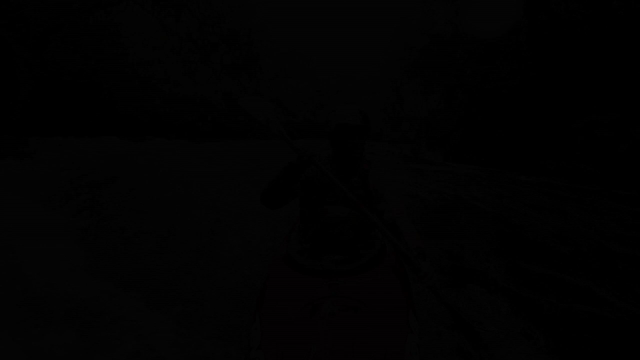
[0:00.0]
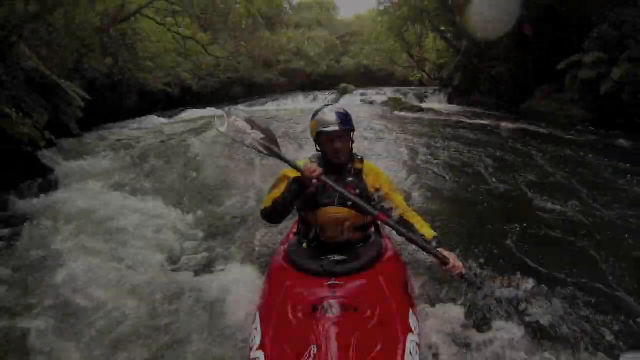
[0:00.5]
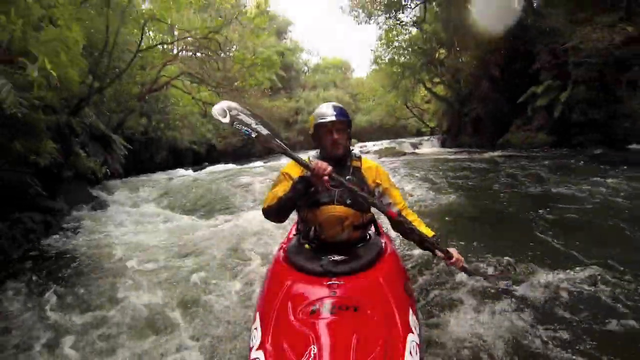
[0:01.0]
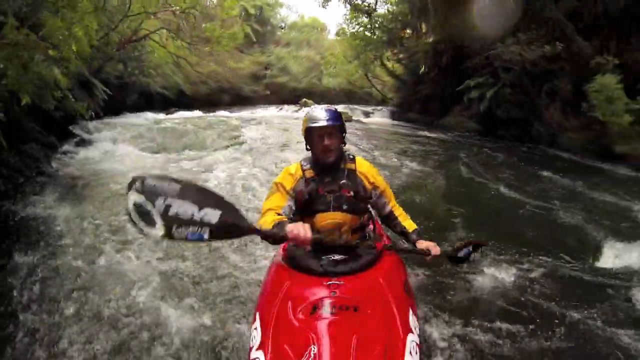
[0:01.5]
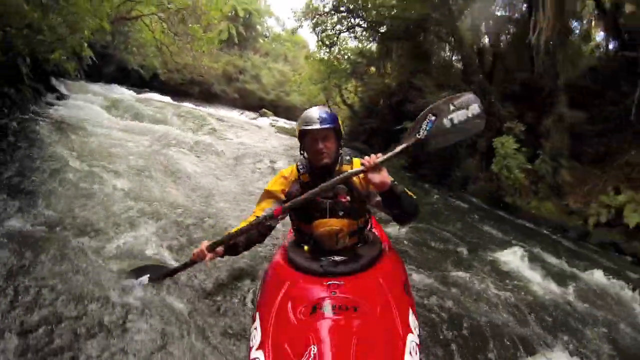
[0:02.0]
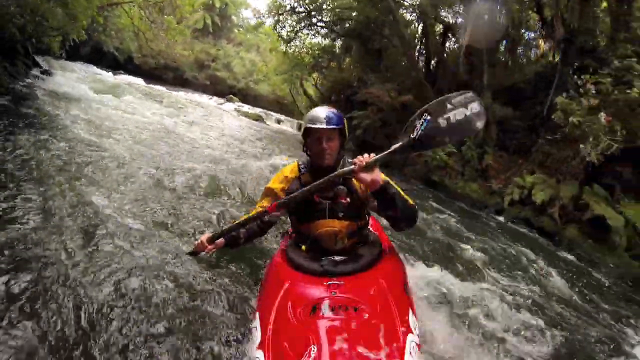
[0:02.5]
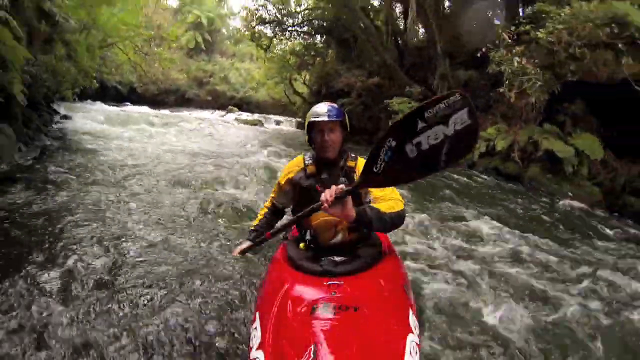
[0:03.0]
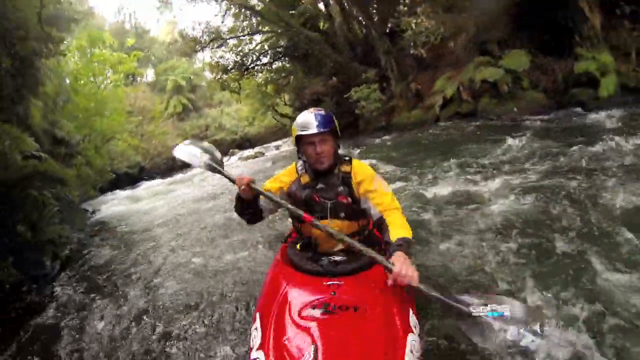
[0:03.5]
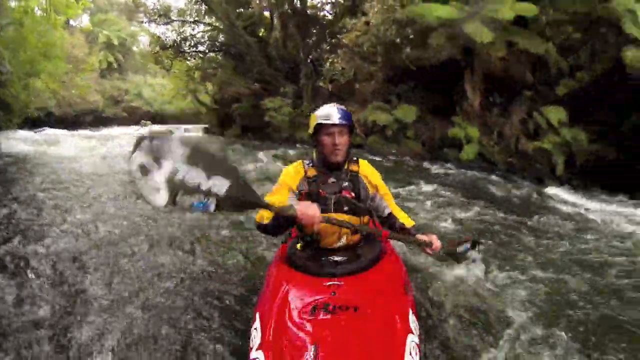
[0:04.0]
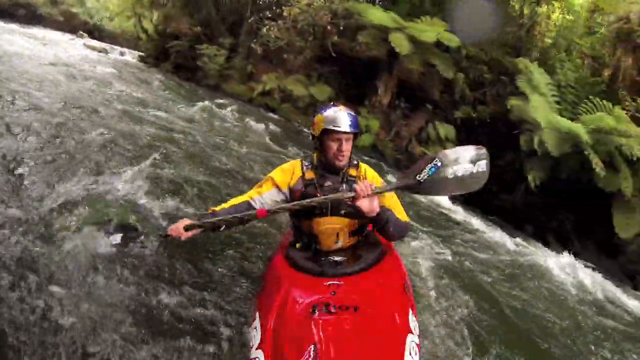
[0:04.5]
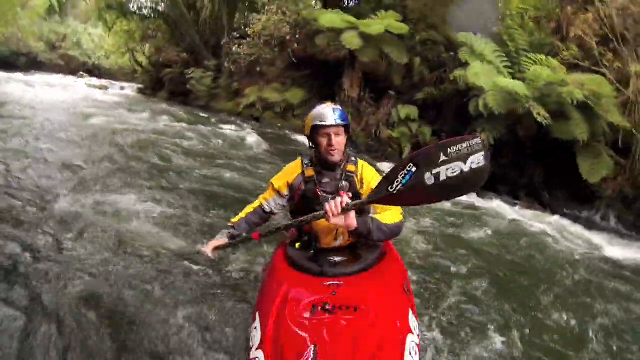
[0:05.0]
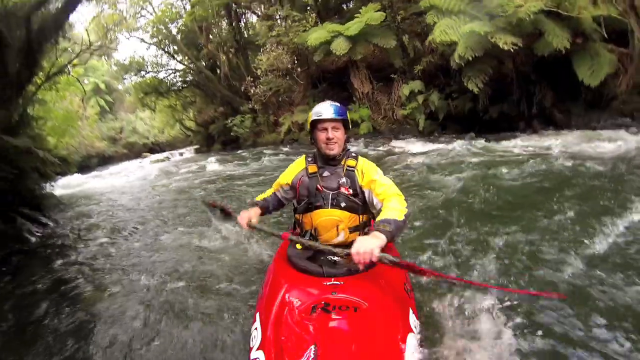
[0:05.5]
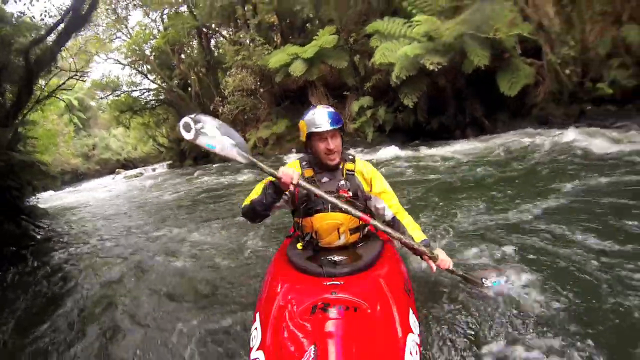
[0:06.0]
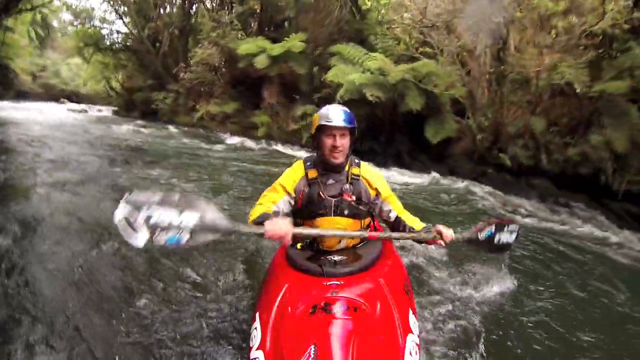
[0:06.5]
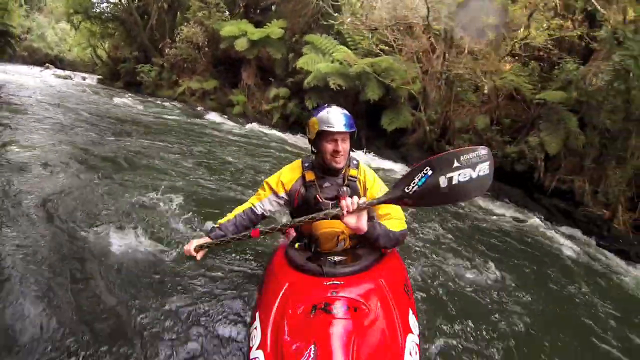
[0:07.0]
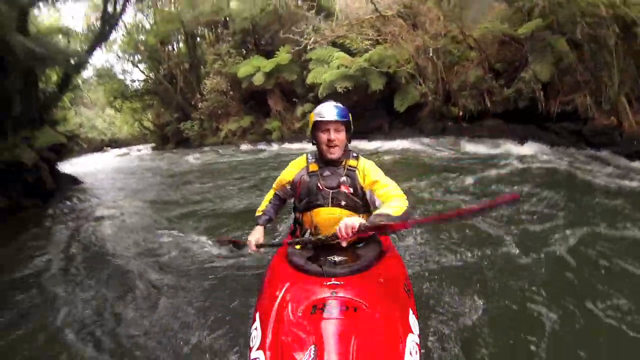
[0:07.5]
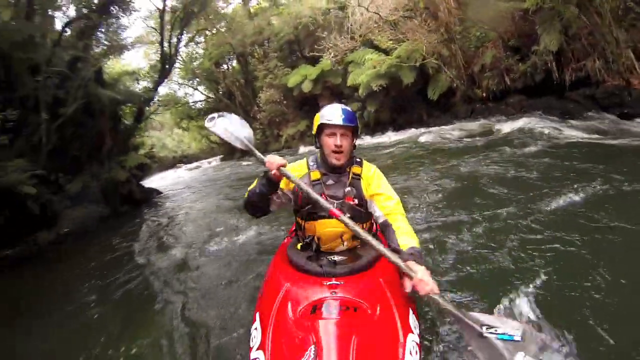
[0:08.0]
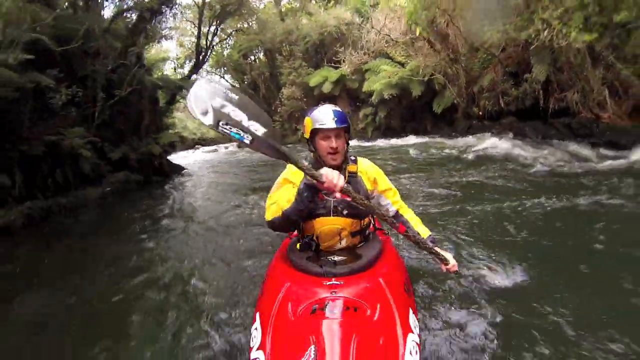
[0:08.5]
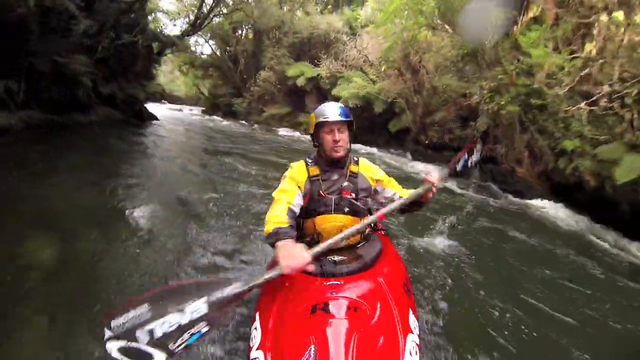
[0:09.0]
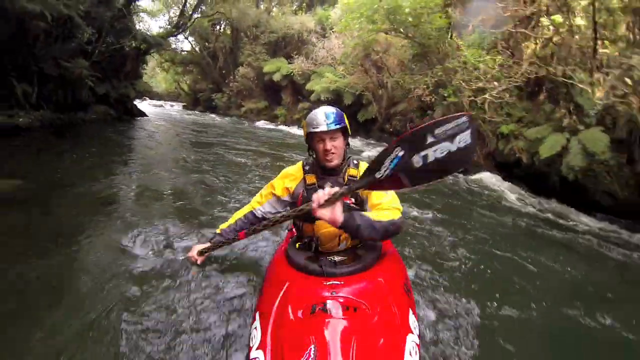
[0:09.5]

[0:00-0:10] A GoPro is attached to the front of a kayak, looking back at a man as he goes down some rapids. Trees line his left and right sides in the background, and the tree line runs back and curves around to the left. He holds a black paddle in his right and left hands and wears a helmet. Some black writing, hard to read, is on the front of the canoe or kayak. He also wears a coat, apparently a yellow jacket. He moves slowly, mostly letting the rapids carry him and using the paddle only to pull himself slightly where he wants to go. He seems to be speaking as he goes and appears very calm. The rapids are not too rough, and a little water splashes up when he puts the paddle in. The river snakes slightly from left to right. Looking closely, he appears to have something attached high on his chest, just above his belly, with two buckles coming up on both sides of his neck and back.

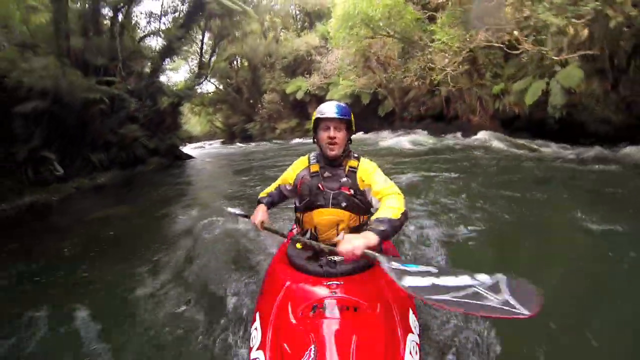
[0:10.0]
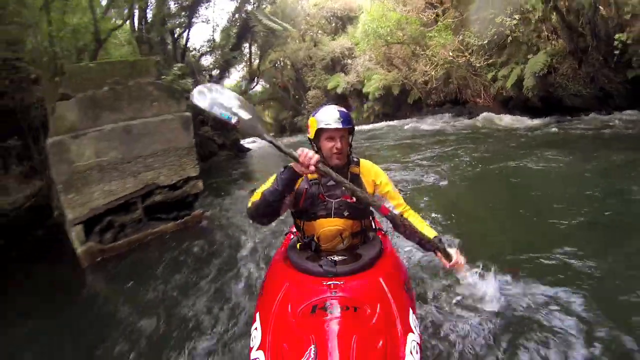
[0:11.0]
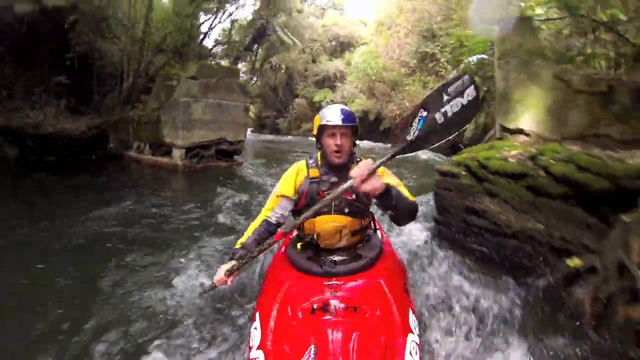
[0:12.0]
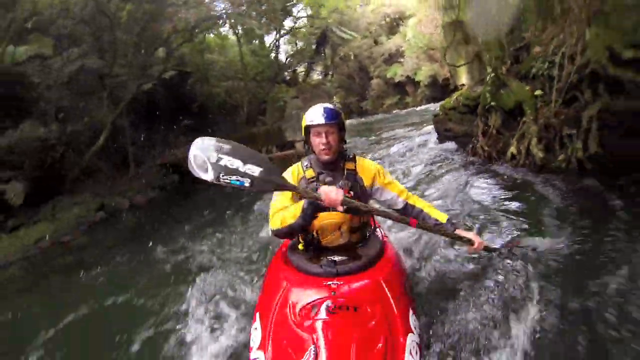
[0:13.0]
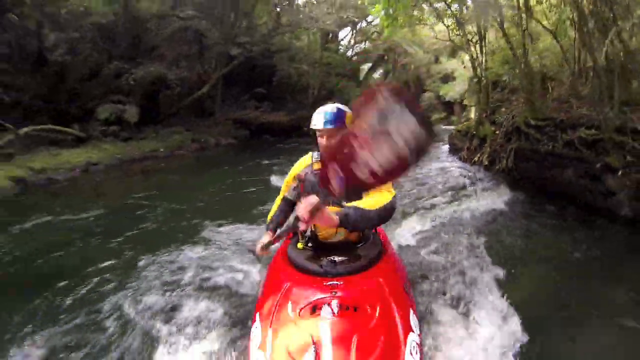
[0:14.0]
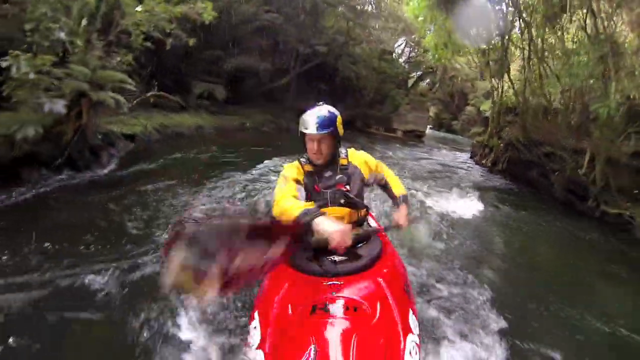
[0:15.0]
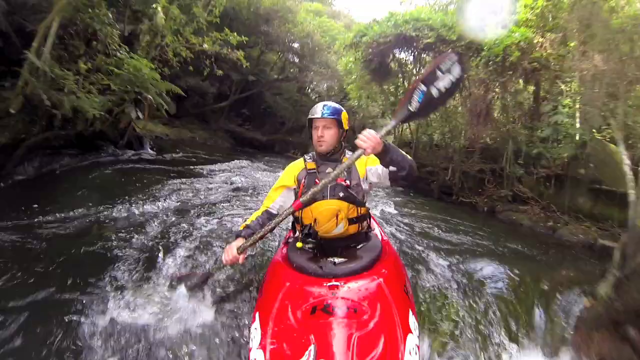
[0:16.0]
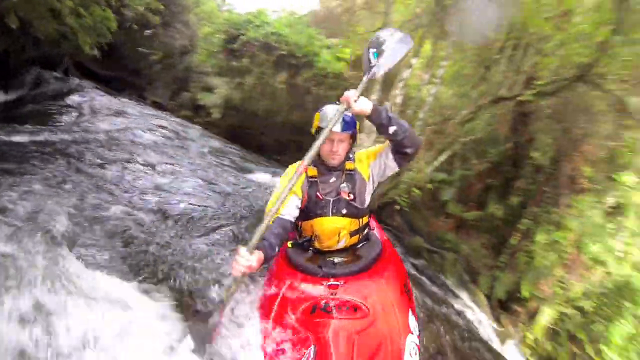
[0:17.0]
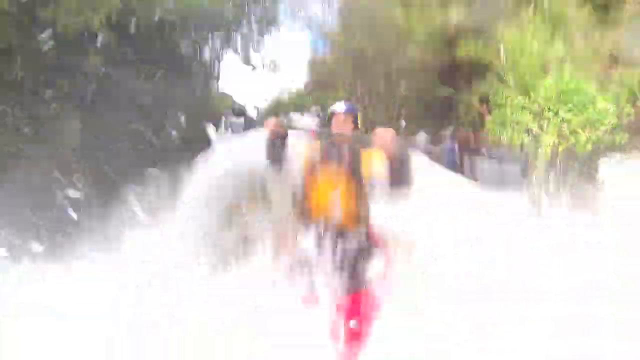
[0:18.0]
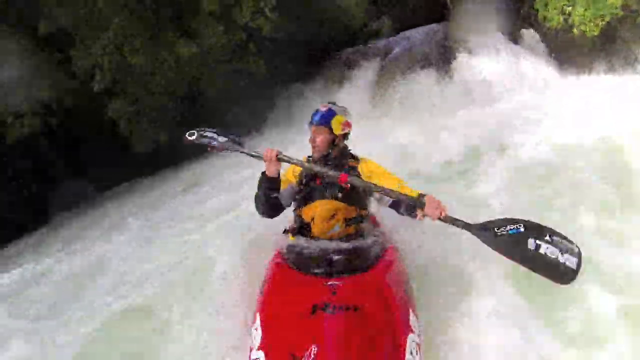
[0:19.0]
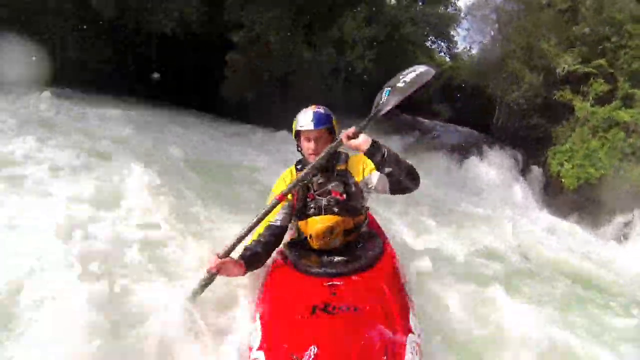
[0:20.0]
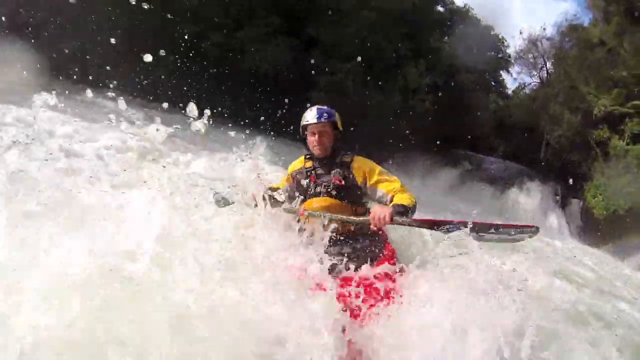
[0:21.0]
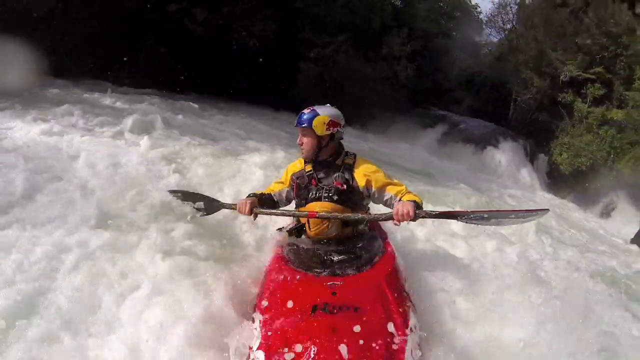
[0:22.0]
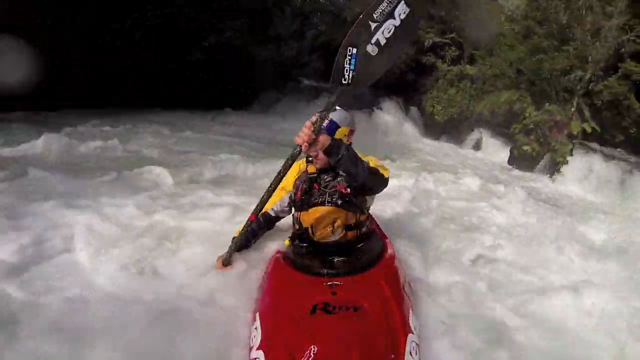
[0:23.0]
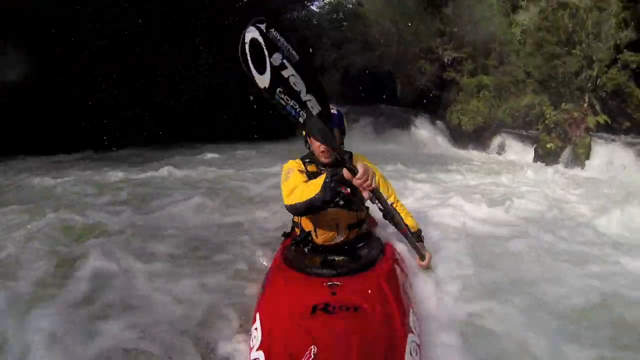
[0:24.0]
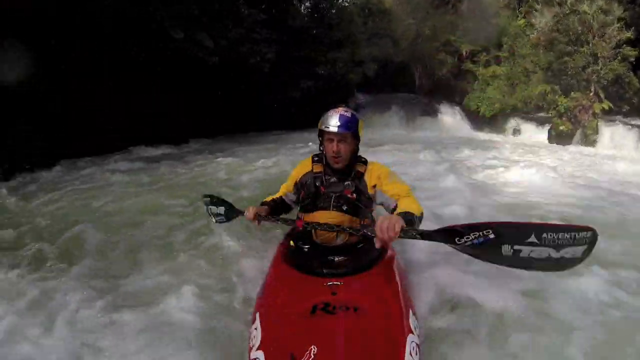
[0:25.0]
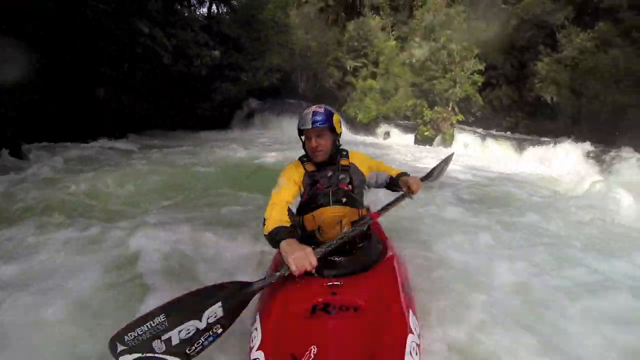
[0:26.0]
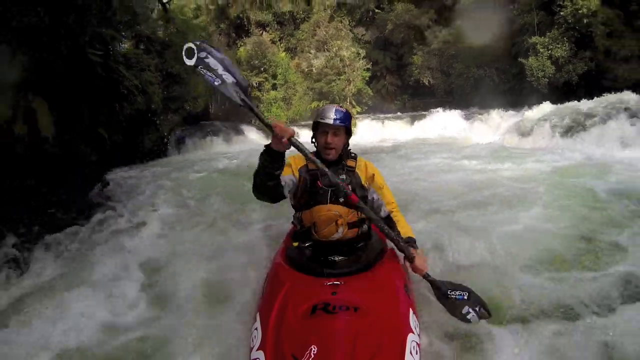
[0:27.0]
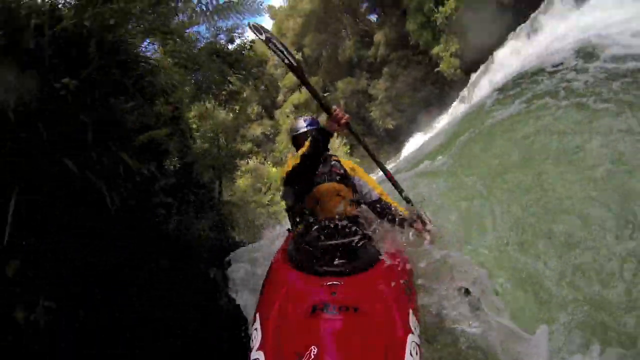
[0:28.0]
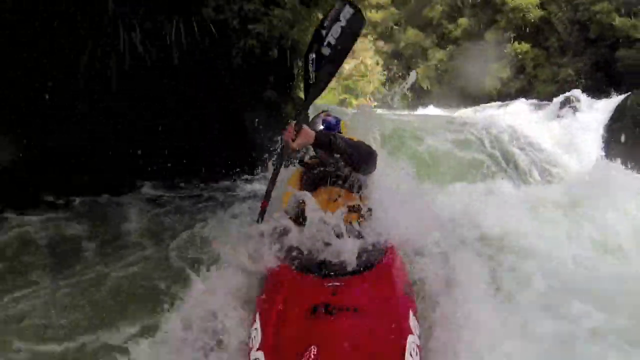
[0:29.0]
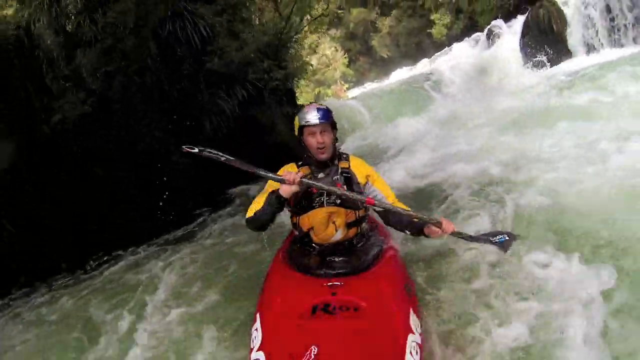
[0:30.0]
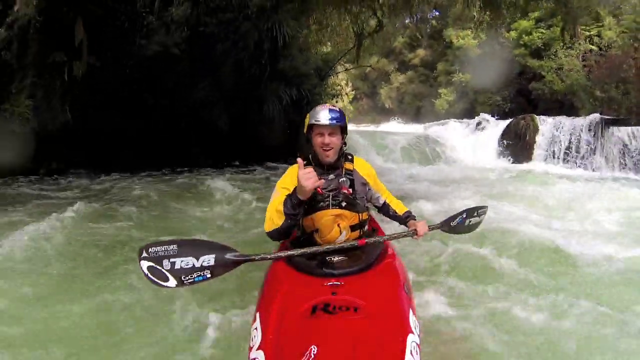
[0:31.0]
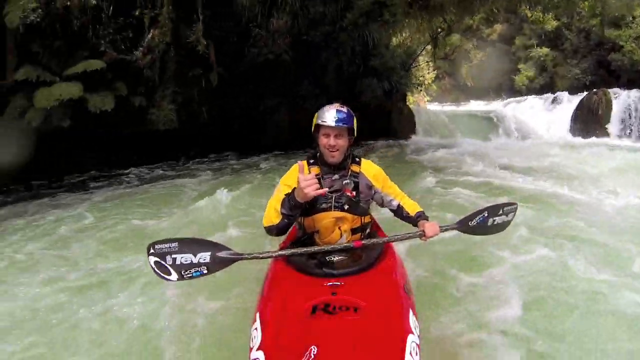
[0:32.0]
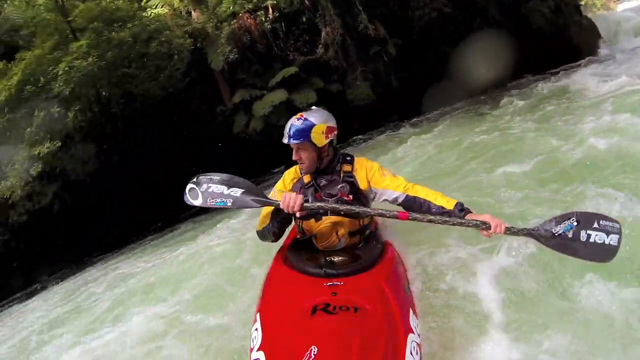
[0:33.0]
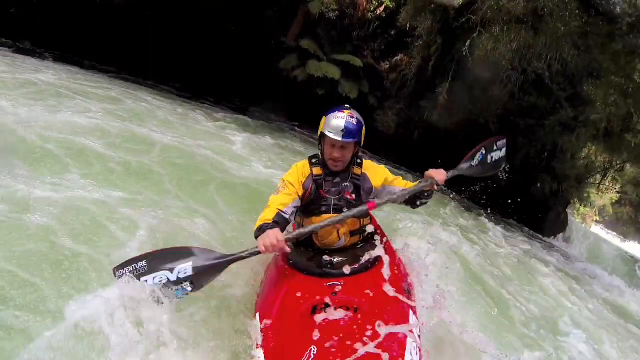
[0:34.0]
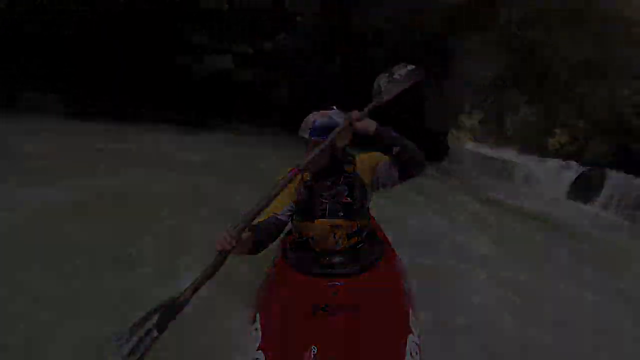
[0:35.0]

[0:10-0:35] The man continues down the river, which has some ripples and is rougher where he cuts through. He passes a concrete pillar on his left that seems to be built into the ground a little, and he avoids it. Some writing is visible that appears to be upside down from the camera's view, starting with what looks like a T, with a sticker underneath it that looks like an Oakley logo. He starts moving a little quicker through a narrower area and uses his right arm to pull himself along. Then there is a big crash down what looks like a drop-off, a huge splashdown that leaves him fully covered in water. The kayak fills up a little but does not sink. Looking back, the cascading waterfall is visible, probably only about a four or five foot drop, stirring the water up so it billows and splashes. A few water droplets are on the camera. The sun pokes through on the right on a somewhat cloudy day. Apparently near the end, a couple of small drop-offs or waterfalls come through the trees on the right side, smaller than the big one. He paddles back and forth, and the camera tilts sideways briefly during another splashdown. He almost clips a bluff jutting out on the left side. He shakes his head to get the water off, makes a surf's-up sign with his right hand while holding the paddle parallel to the camera, looks around, spits out a little water, and composes himself.